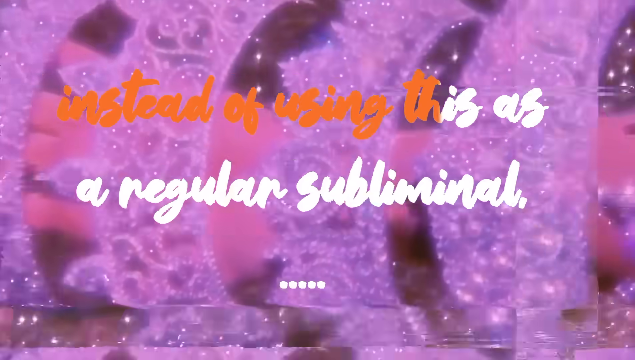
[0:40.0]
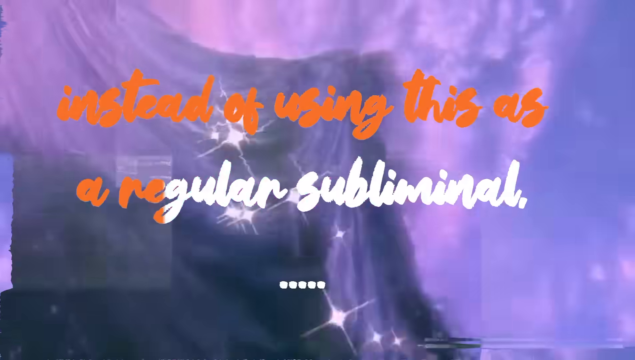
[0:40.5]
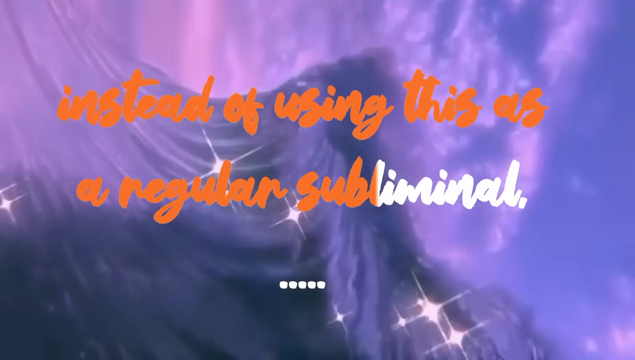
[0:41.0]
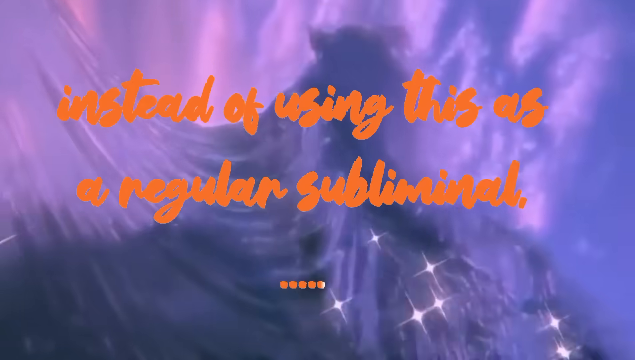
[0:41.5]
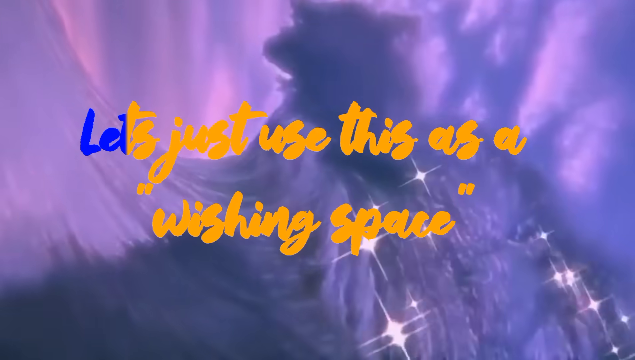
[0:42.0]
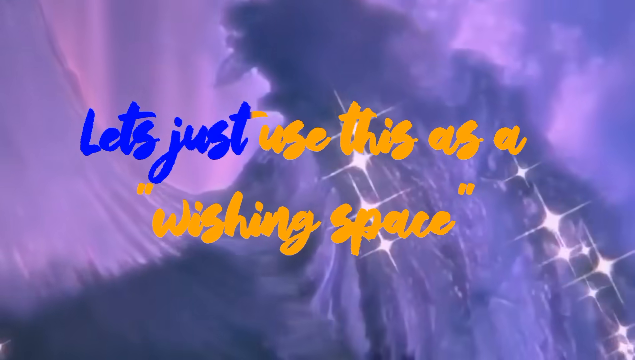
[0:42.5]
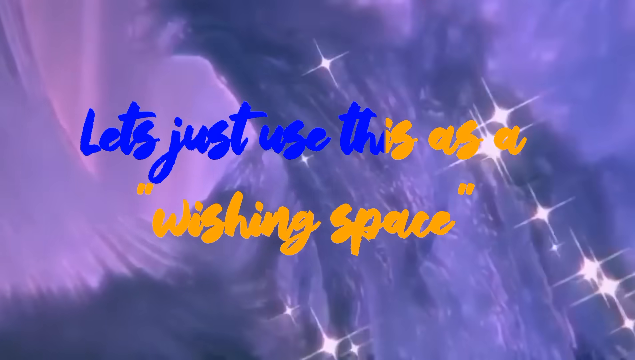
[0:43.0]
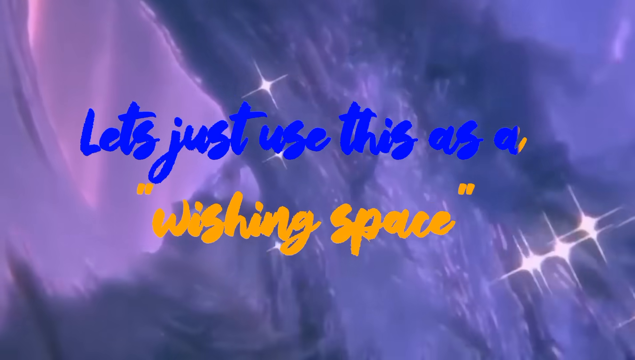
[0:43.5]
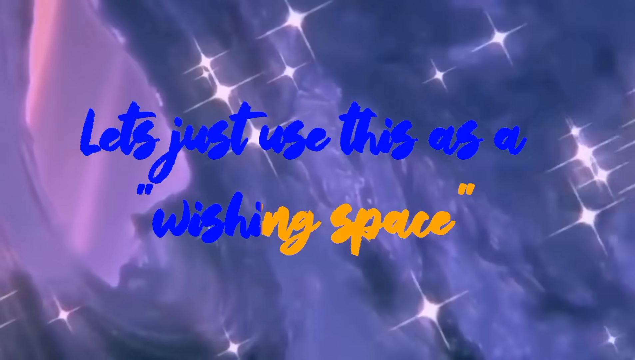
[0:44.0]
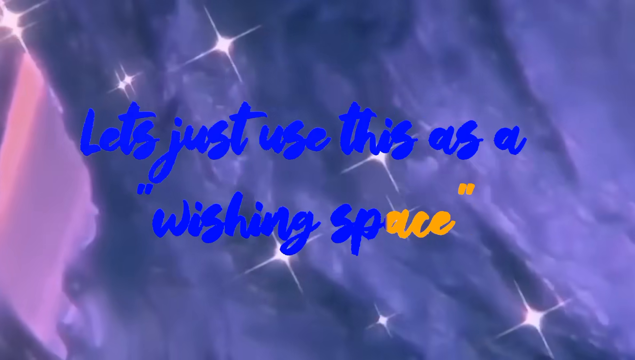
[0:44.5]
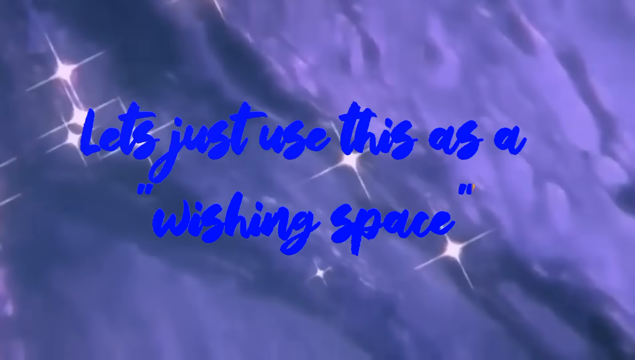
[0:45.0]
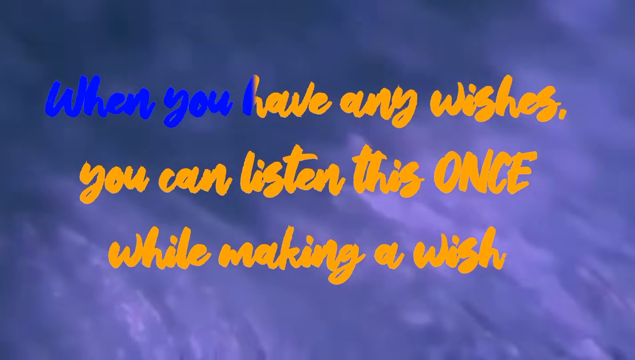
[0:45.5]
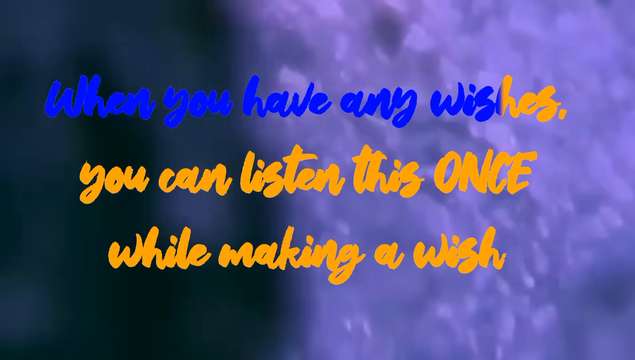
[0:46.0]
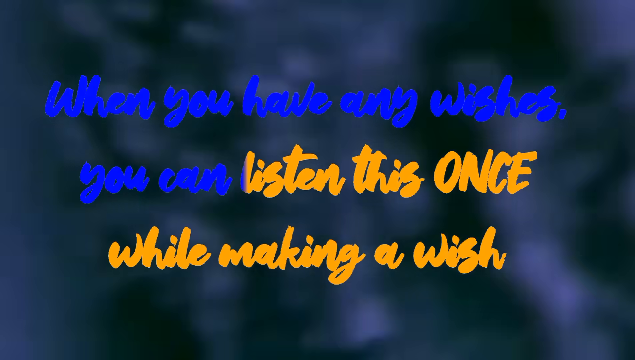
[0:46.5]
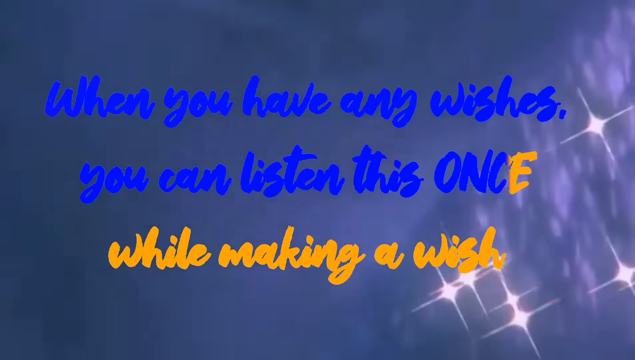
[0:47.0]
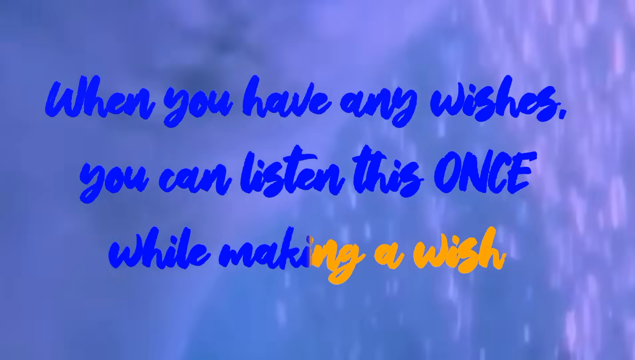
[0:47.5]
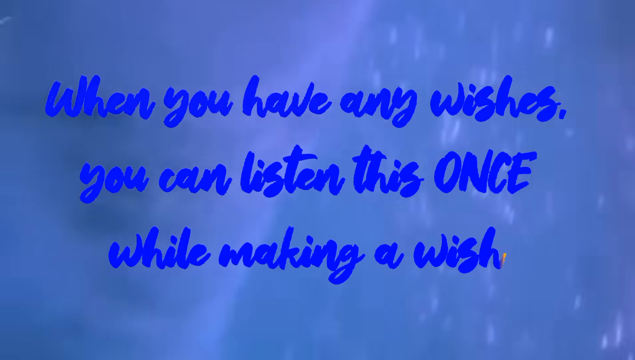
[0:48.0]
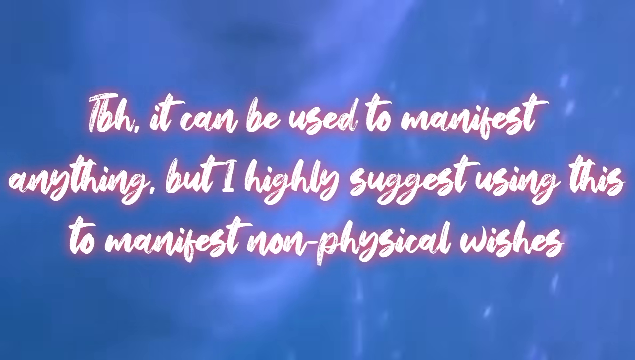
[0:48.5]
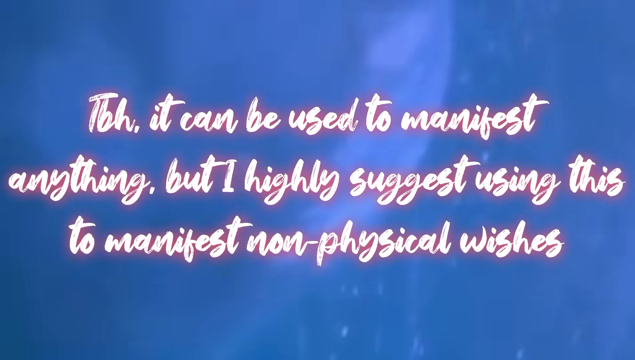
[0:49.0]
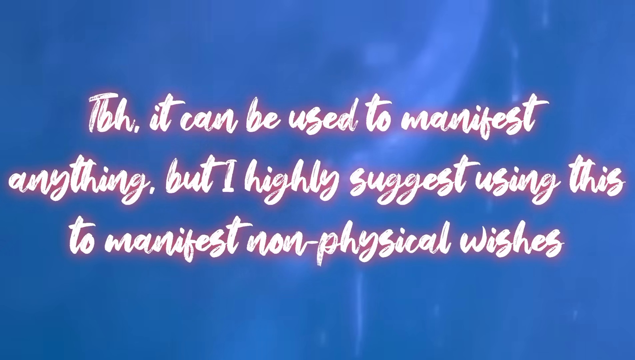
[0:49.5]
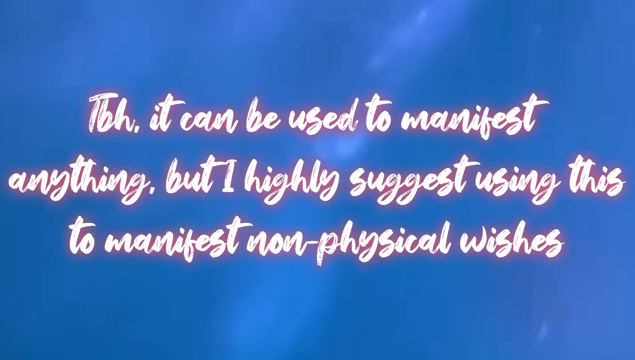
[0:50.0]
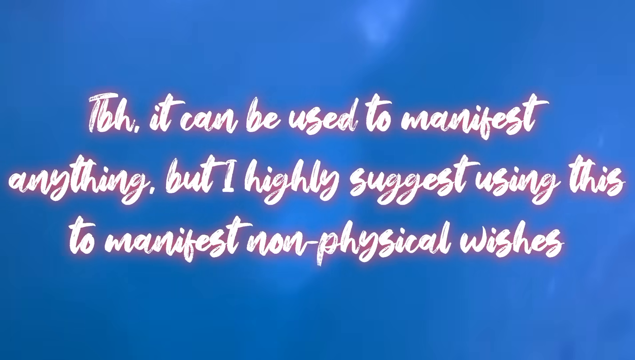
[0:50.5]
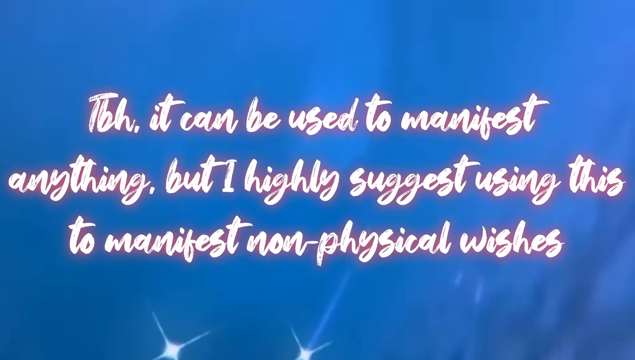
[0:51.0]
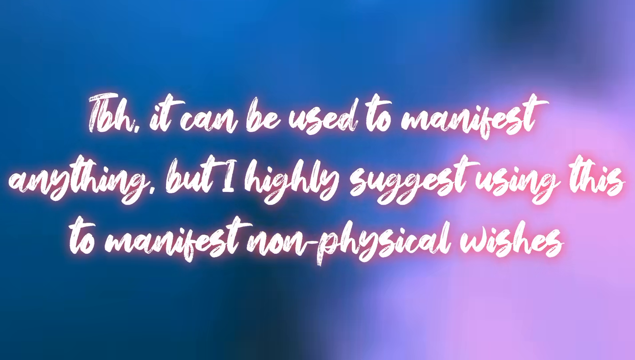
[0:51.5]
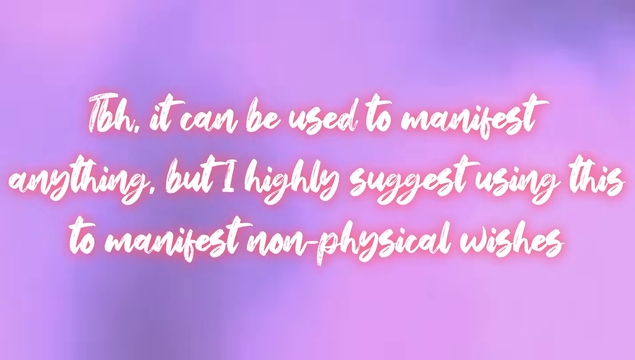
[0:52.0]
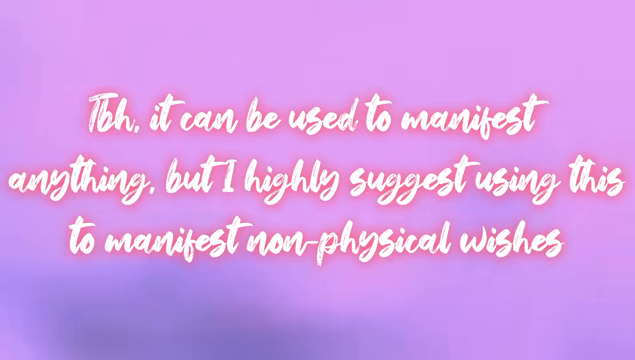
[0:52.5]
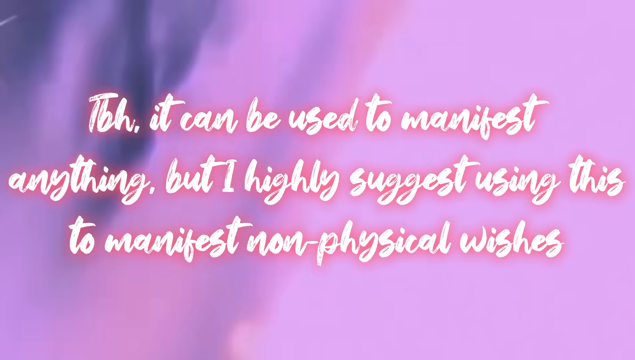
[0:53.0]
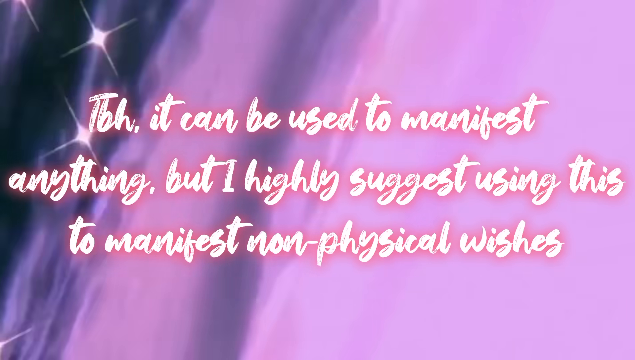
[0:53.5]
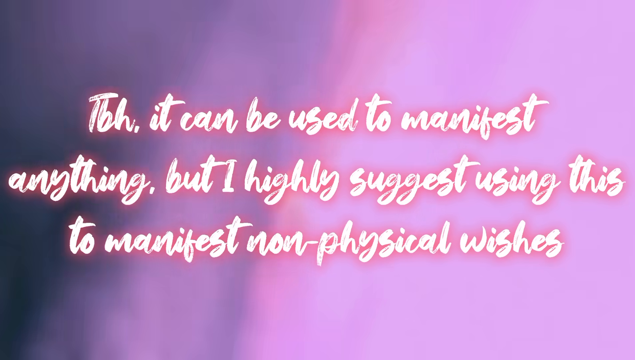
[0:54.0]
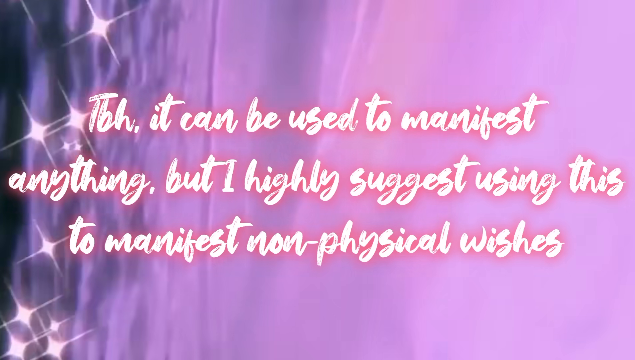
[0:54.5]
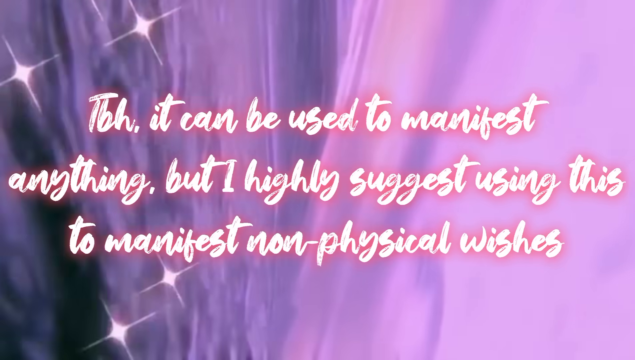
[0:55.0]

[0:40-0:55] The video, I want it, I get it, by Falling Star, continues. Some words cannot be read because they are behind the next video card. Text says "you can making a wish, suggest using this non-physical wish." The video is very artsy and very strange, with a lot of glittery background and many sped-up scenes. There are many images of cityscapes, but they are sideways and very strange, and twinkly, very colorful video plays in the background. The letters "MOZA MORPH" are in the bottom right-hand corner. The colors are very vibrant and the background is shimmery.